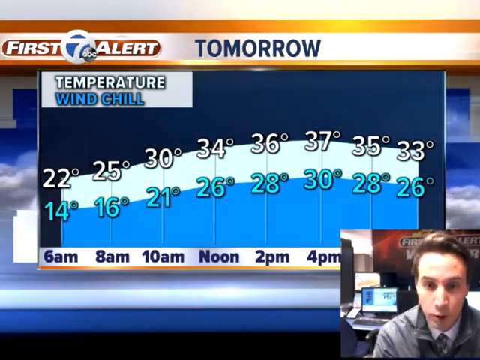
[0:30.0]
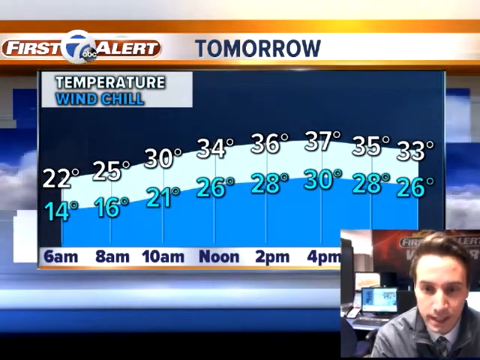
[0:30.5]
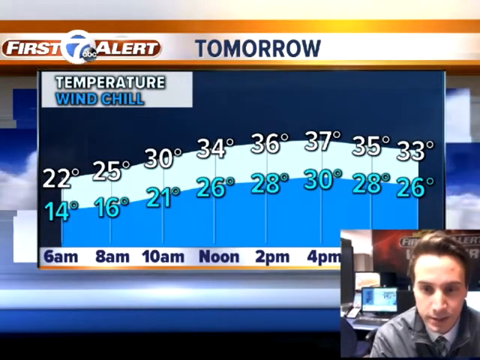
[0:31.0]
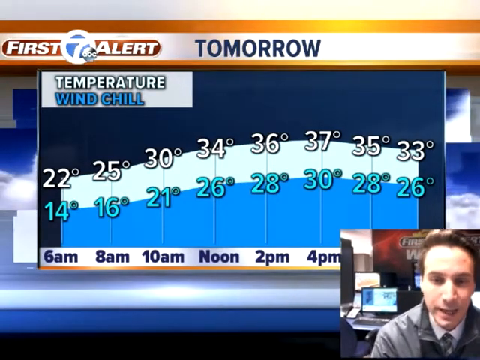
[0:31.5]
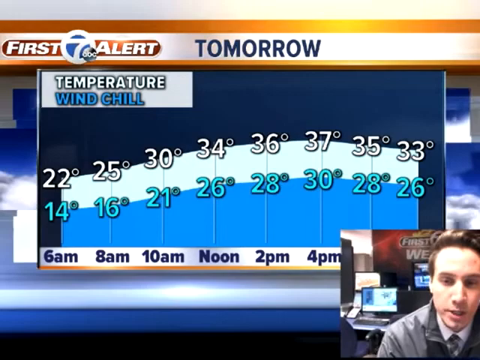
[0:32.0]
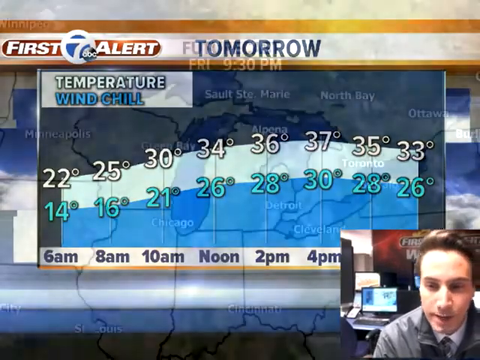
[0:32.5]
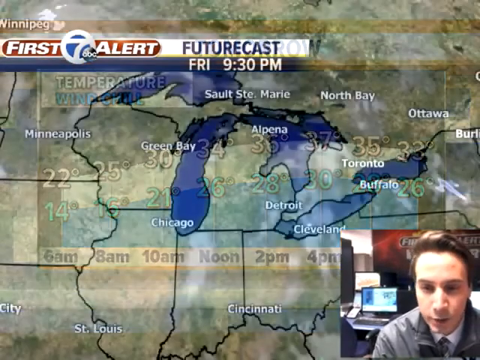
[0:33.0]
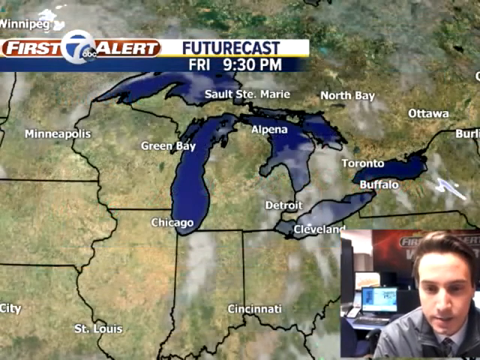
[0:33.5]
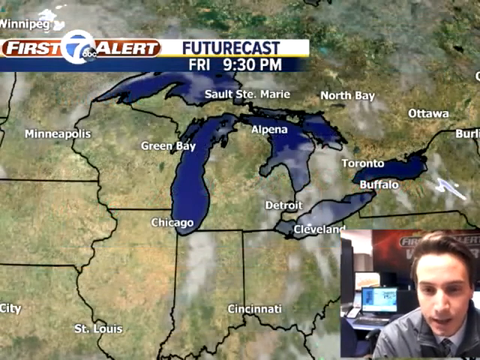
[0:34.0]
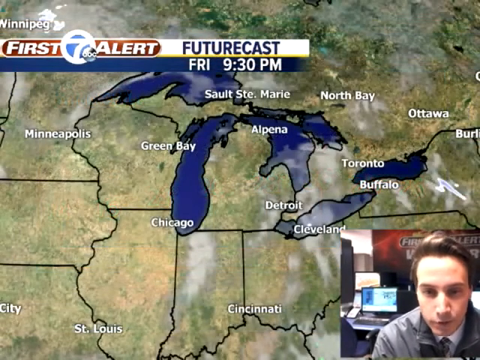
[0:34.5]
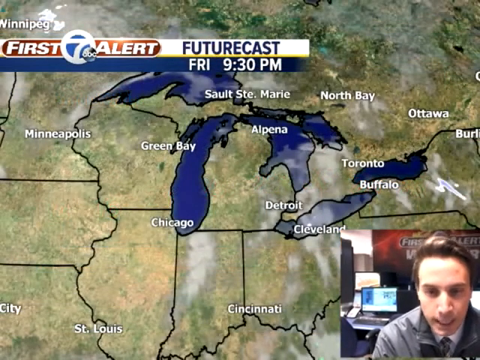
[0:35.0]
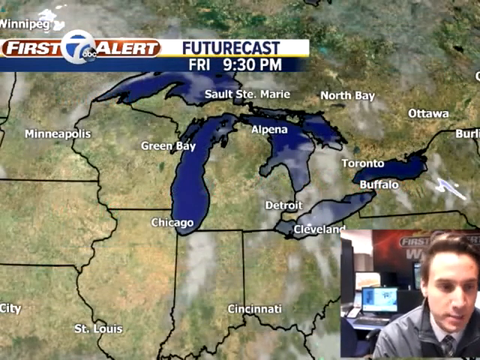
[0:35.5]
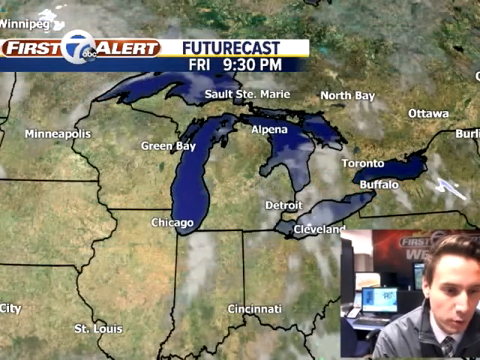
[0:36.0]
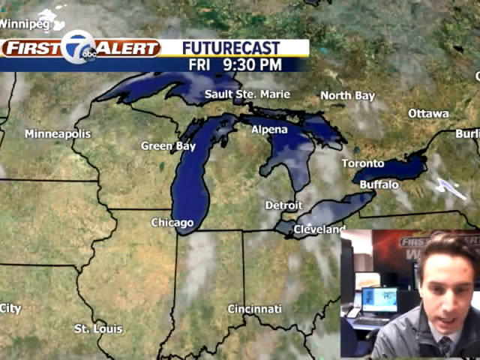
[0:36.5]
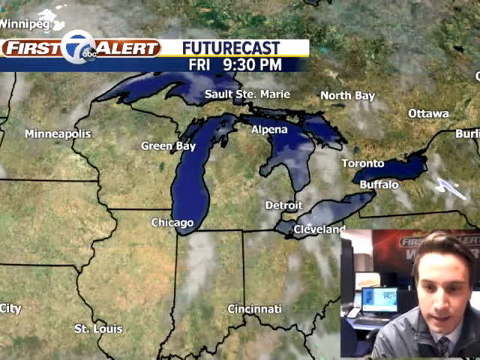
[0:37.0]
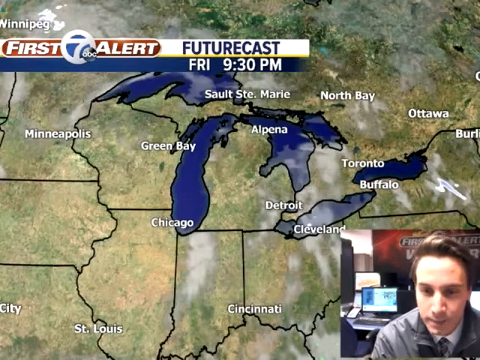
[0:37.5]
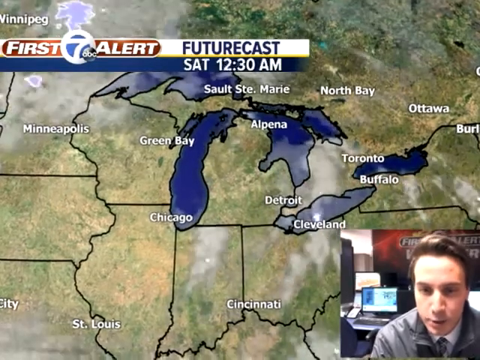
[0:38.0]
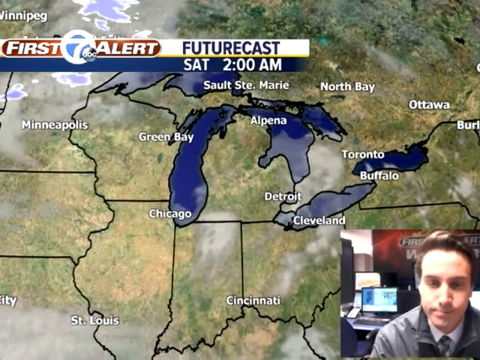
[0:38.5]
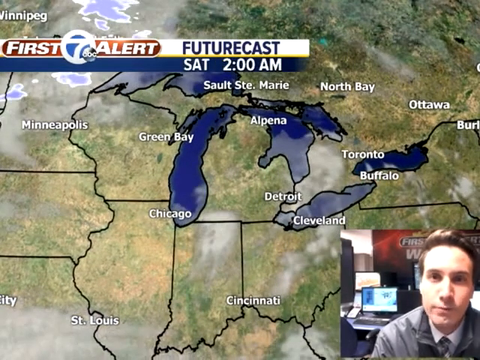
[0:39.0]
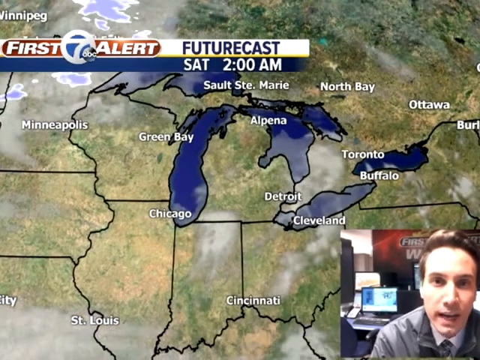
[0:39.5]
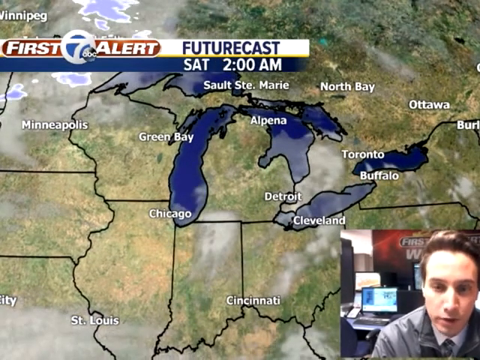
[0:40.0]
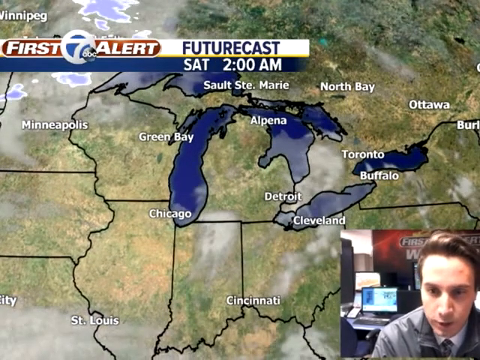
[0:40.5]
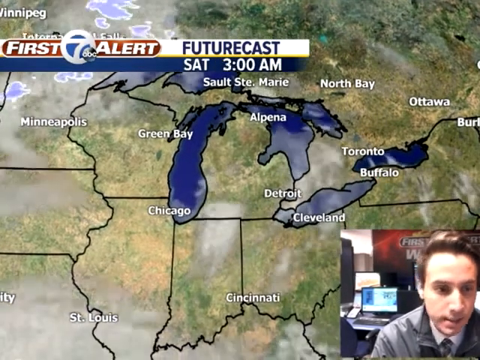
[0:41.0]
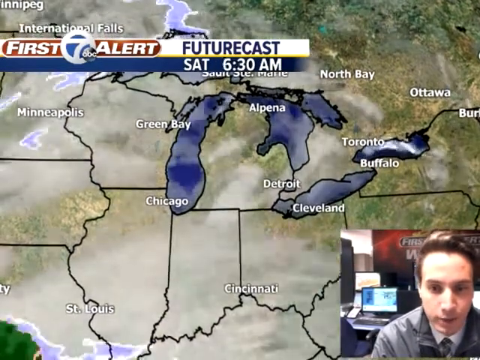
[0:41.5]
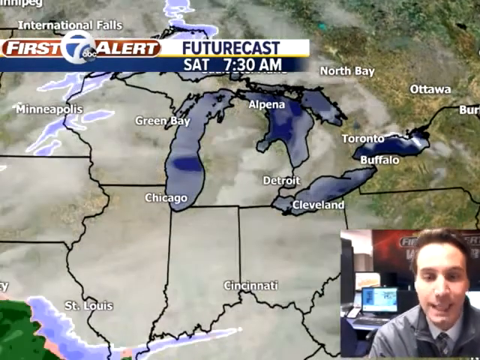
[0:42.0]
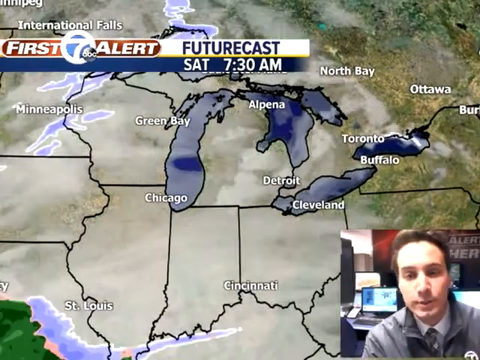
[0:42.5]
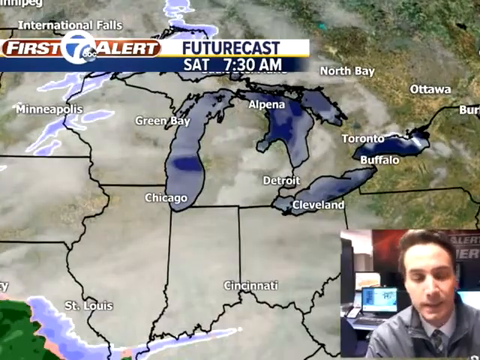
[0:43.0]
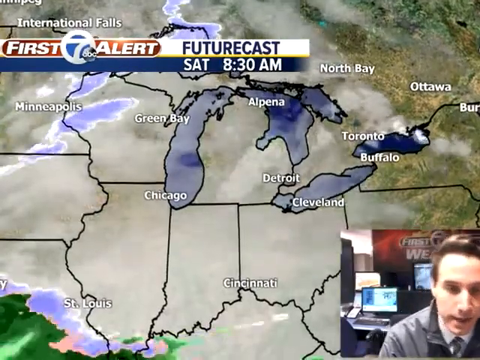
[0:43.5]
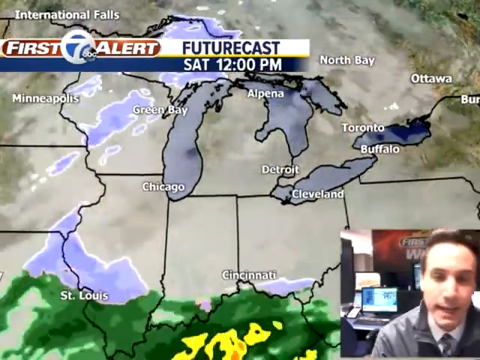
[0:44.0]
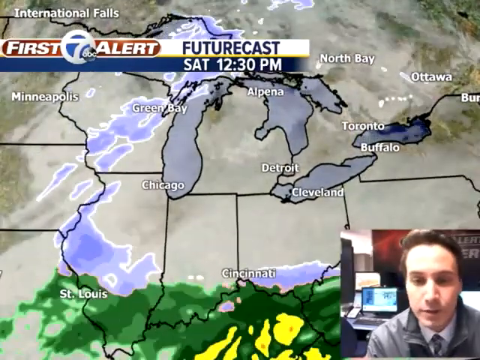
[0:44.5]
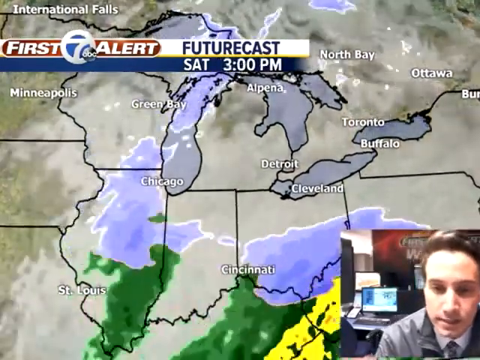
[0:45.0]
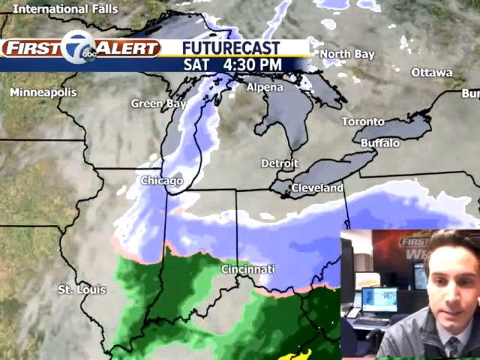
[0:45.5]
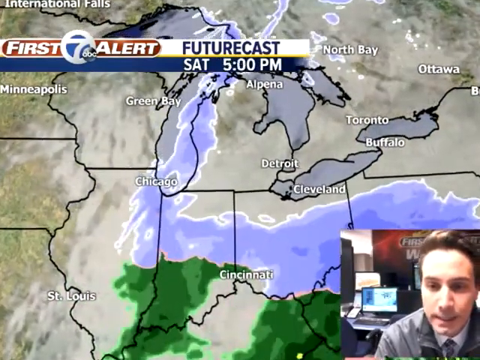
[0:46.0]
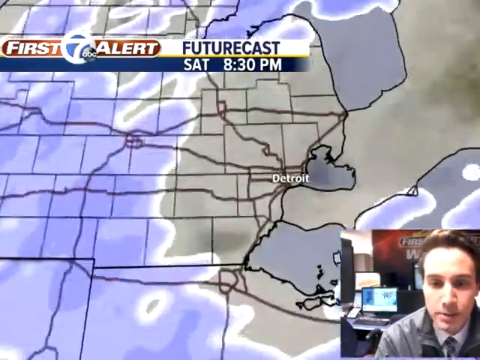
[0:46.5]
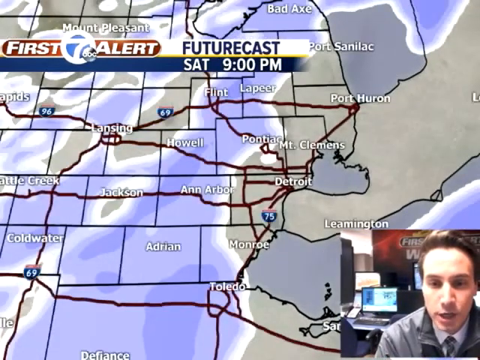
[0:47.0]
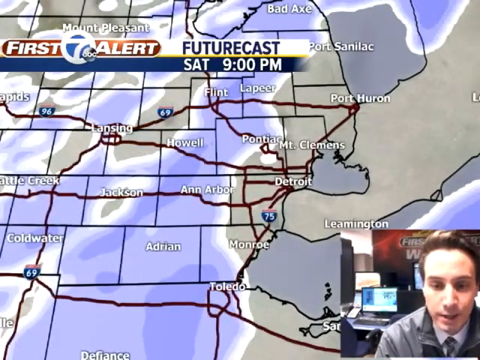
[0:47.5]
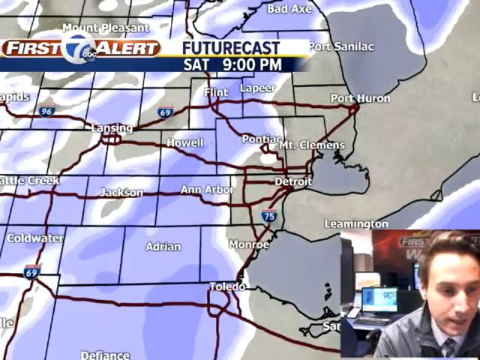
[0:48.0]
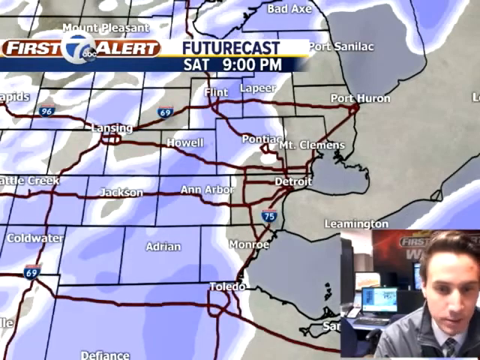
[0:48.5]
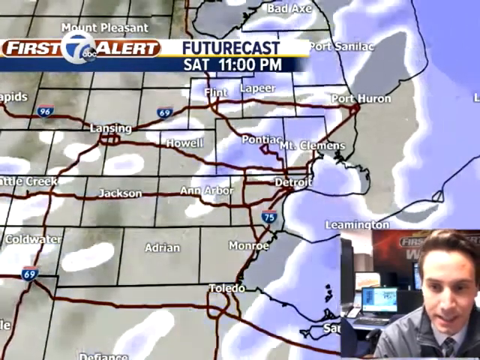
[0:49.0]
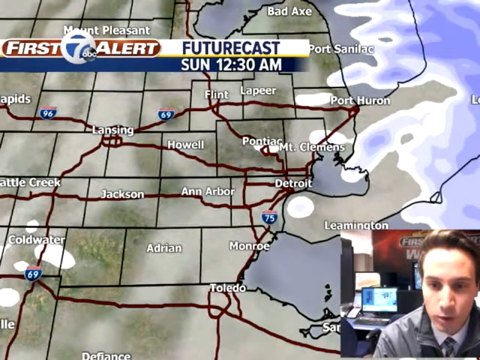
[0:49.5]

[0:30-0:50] An hourly forecast shows pairs of temperatures: 6 a.m. 14 and 22, 8 a.m. 16 and 25, 10 a.m. 21 and 30 degrees, then 26 and 34, 2 p.m. 28 and 36 degrees, 4 p.m. 30 to 37 degrees, going down to 28 and 35 and then 26 to 33 degrees. A future cast for Sunday follows, with cities including Chicago, Detroit and Cleveland.